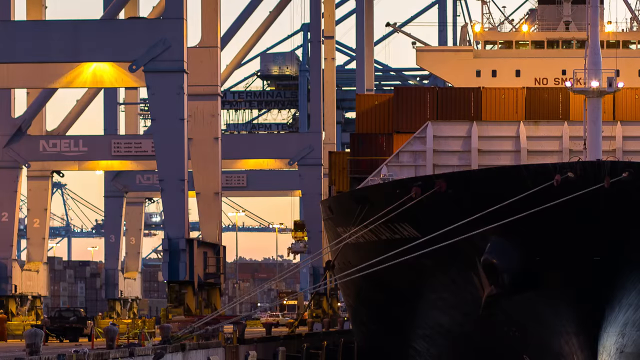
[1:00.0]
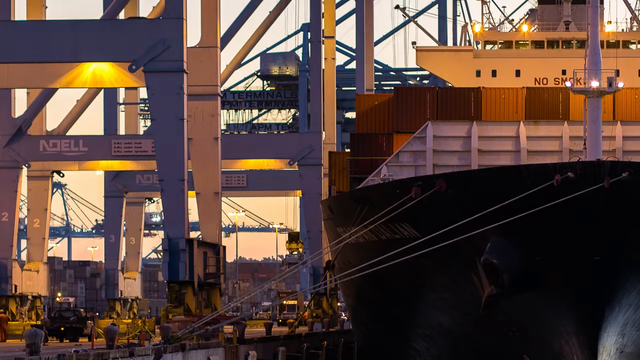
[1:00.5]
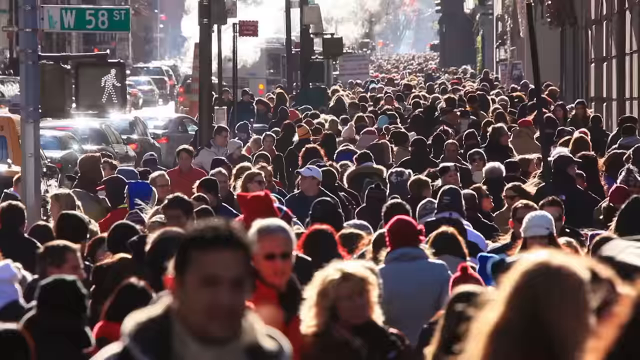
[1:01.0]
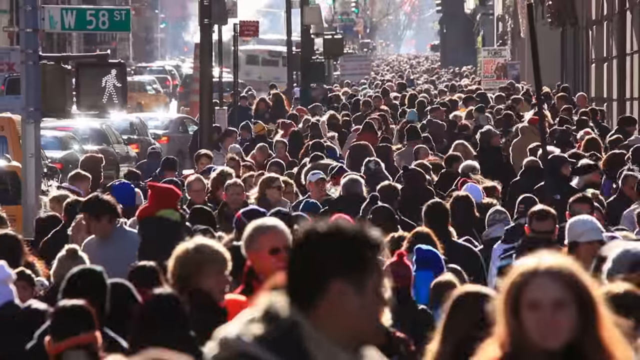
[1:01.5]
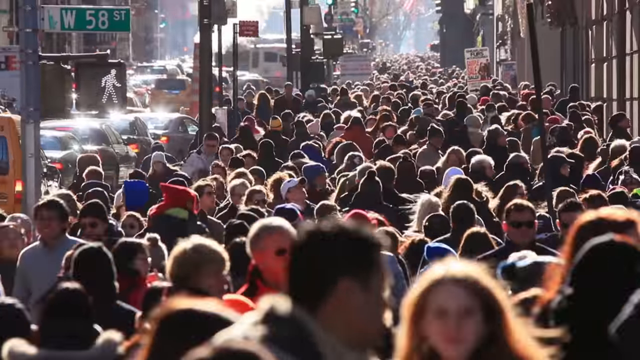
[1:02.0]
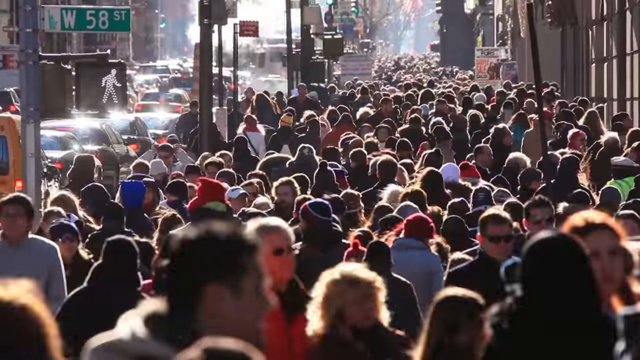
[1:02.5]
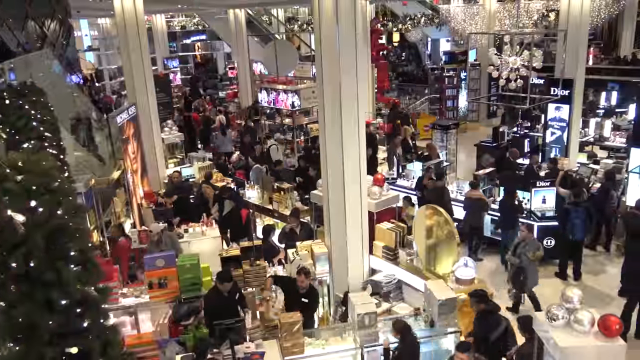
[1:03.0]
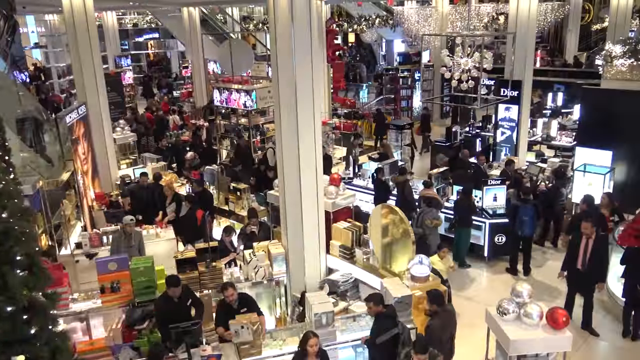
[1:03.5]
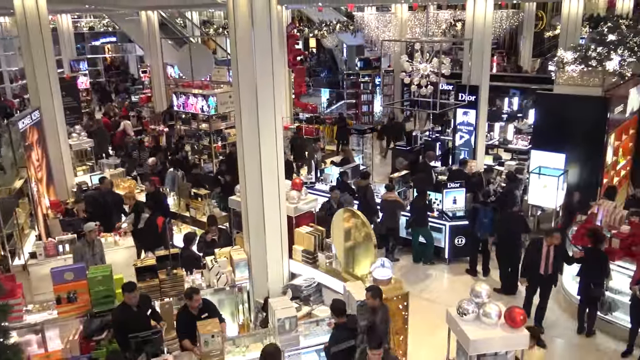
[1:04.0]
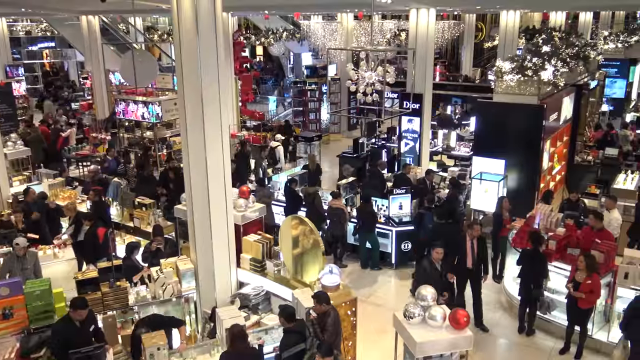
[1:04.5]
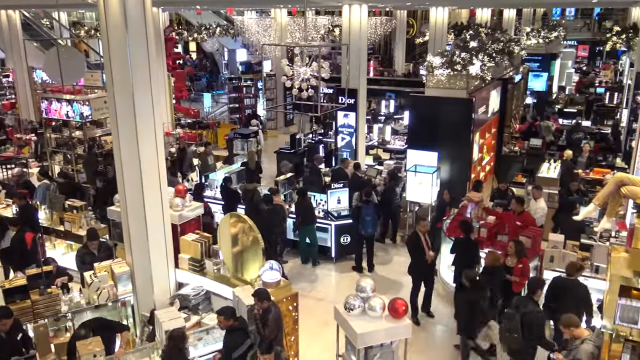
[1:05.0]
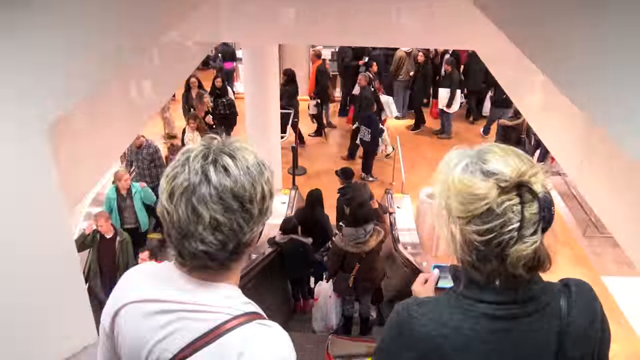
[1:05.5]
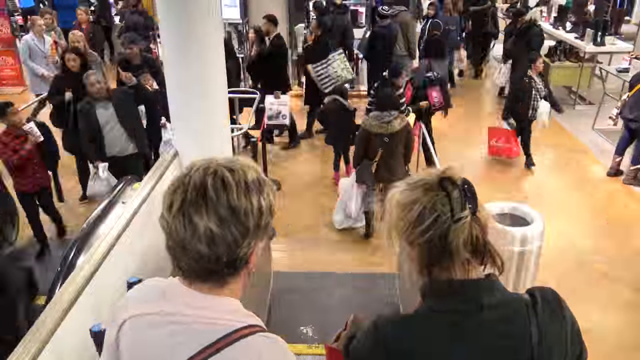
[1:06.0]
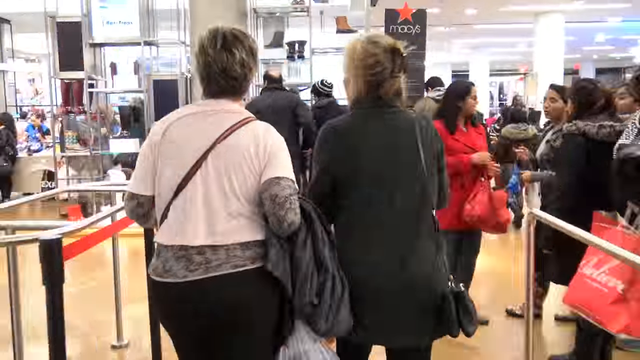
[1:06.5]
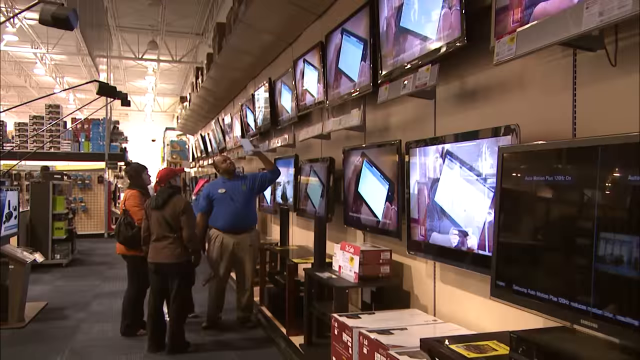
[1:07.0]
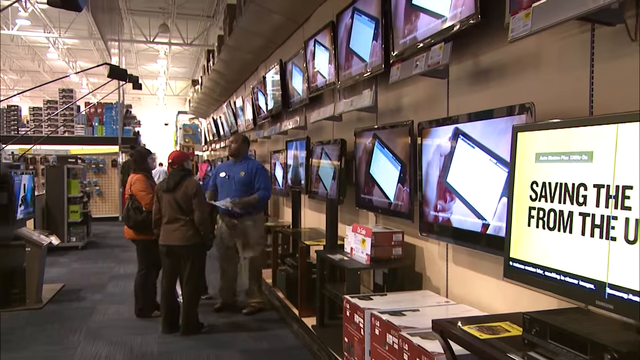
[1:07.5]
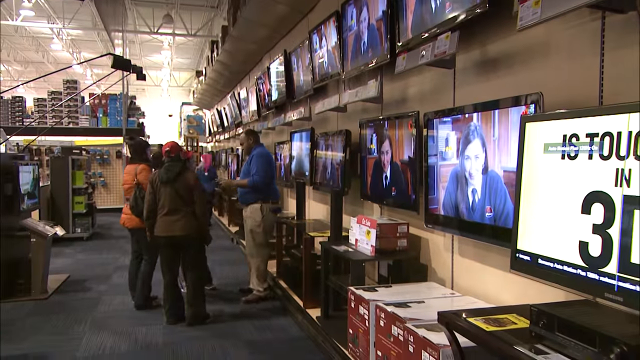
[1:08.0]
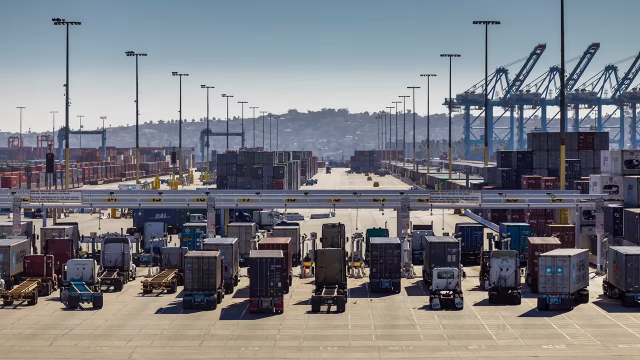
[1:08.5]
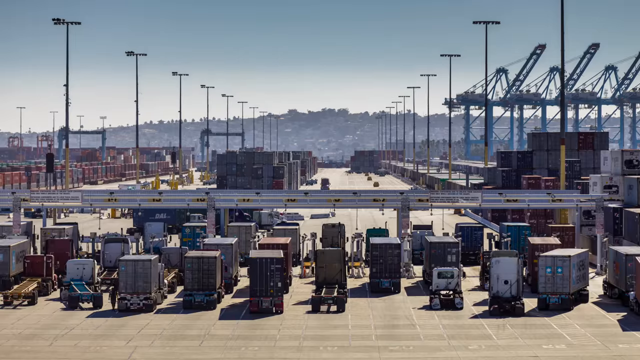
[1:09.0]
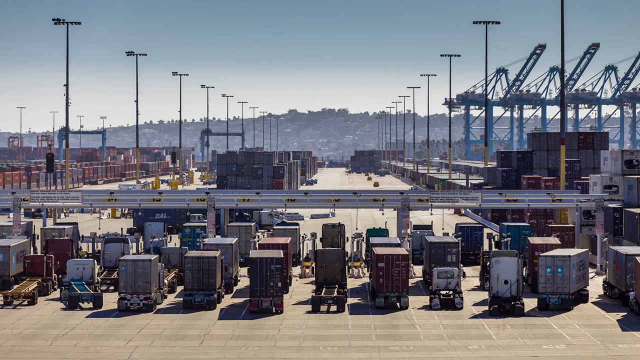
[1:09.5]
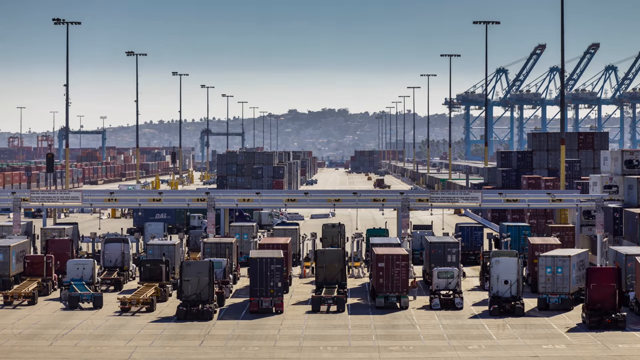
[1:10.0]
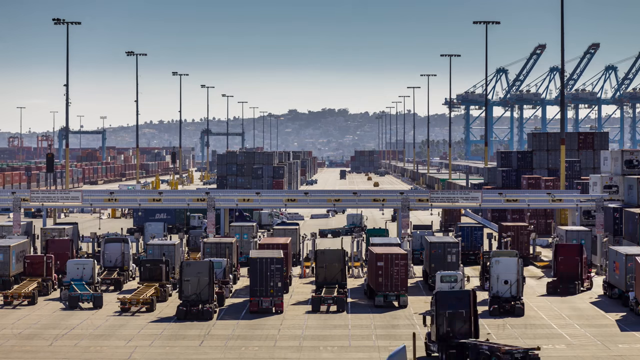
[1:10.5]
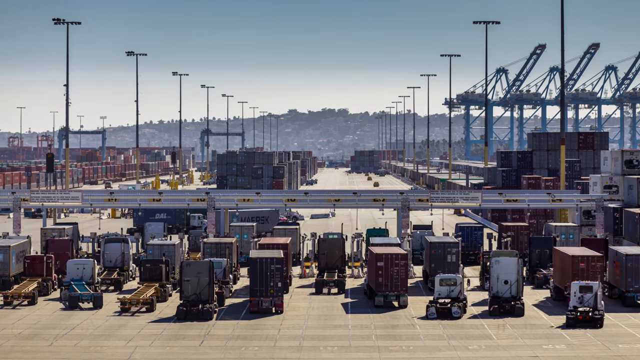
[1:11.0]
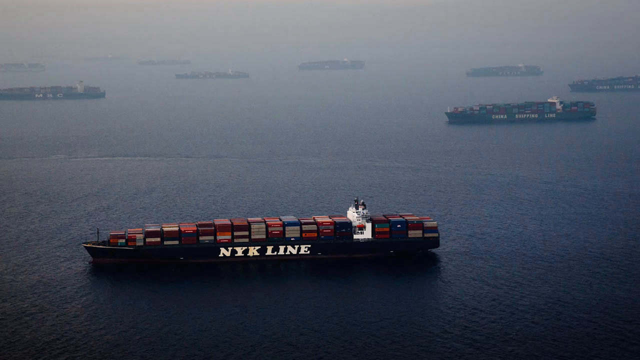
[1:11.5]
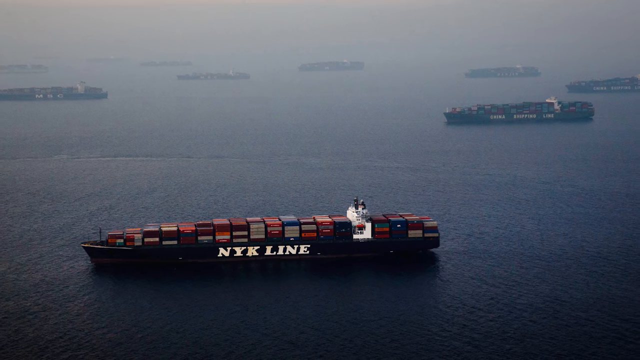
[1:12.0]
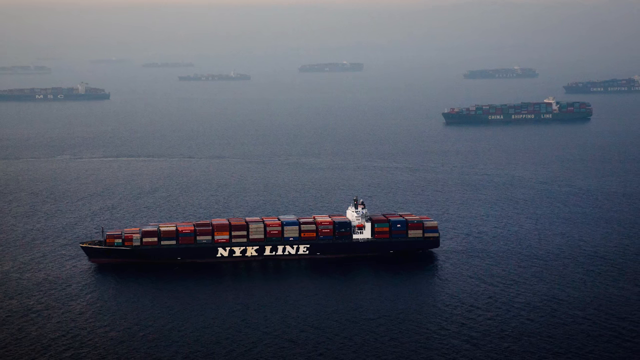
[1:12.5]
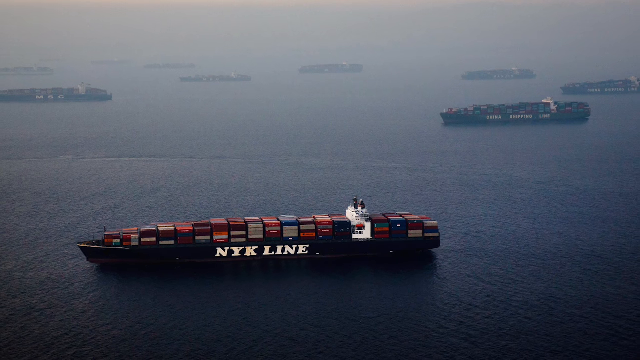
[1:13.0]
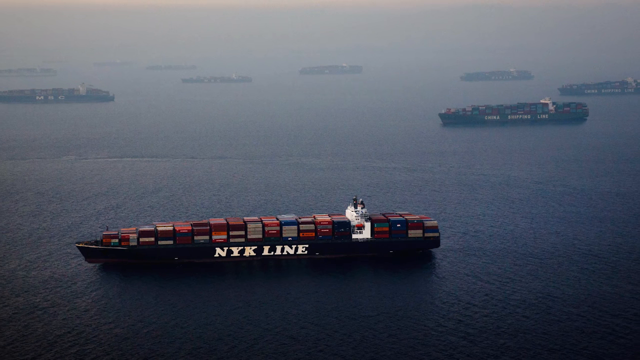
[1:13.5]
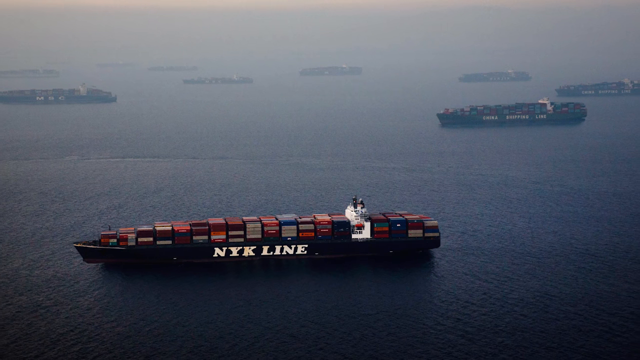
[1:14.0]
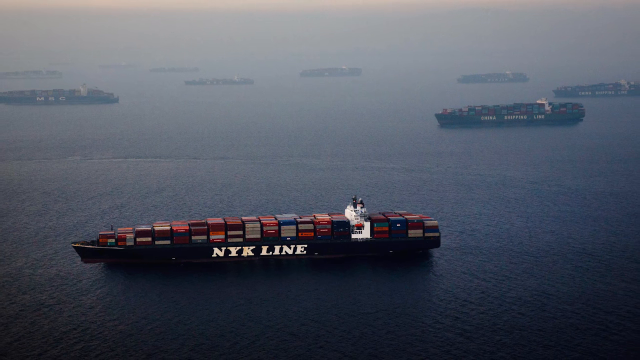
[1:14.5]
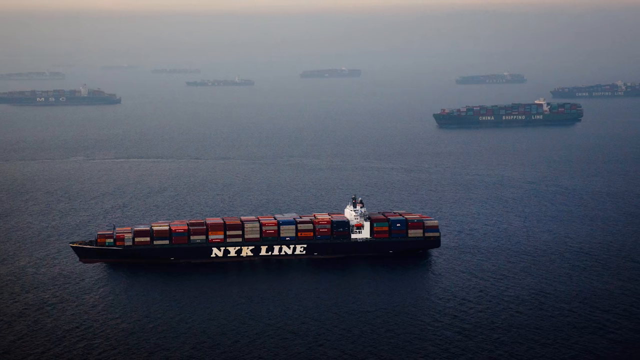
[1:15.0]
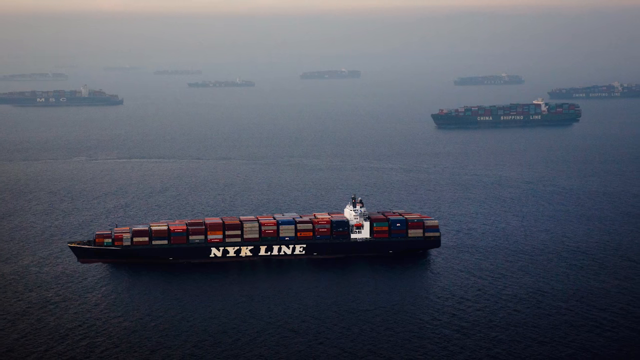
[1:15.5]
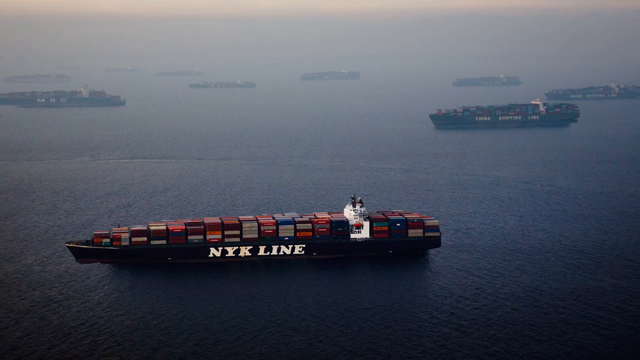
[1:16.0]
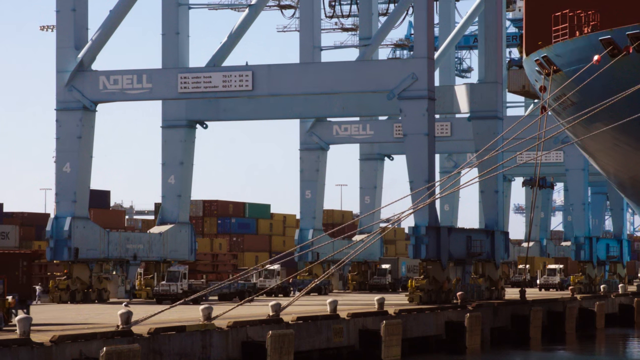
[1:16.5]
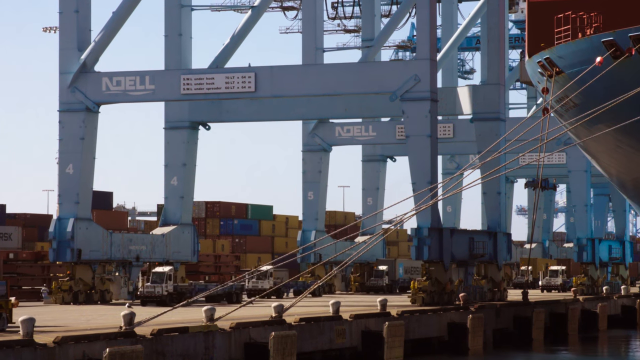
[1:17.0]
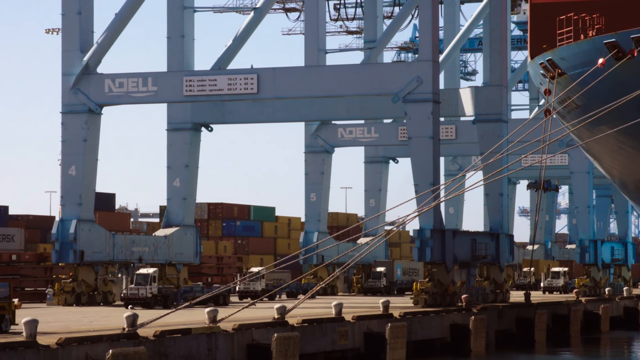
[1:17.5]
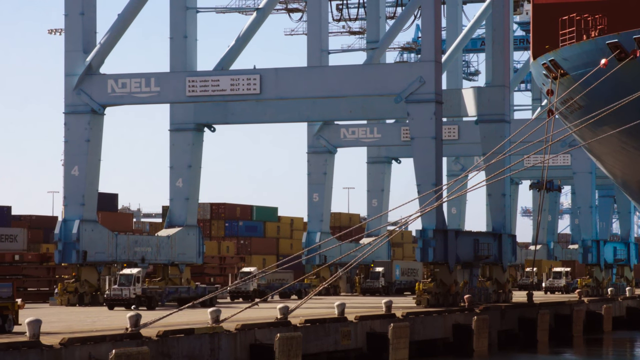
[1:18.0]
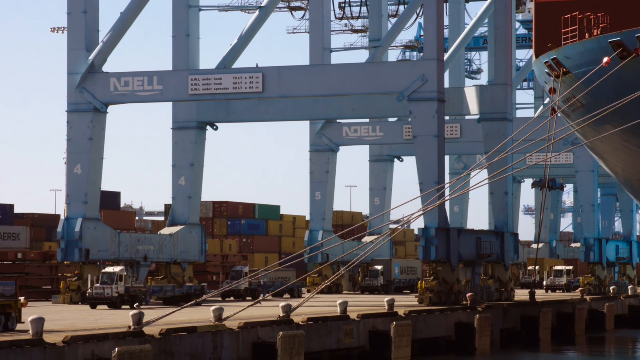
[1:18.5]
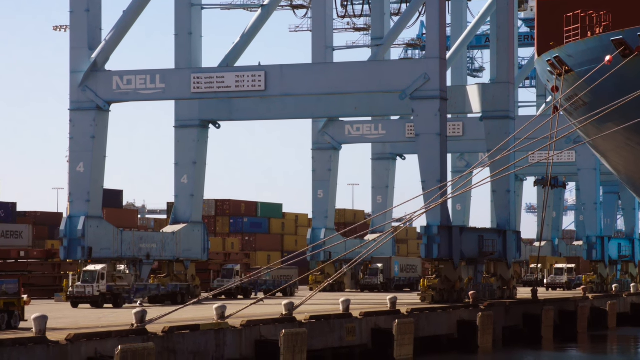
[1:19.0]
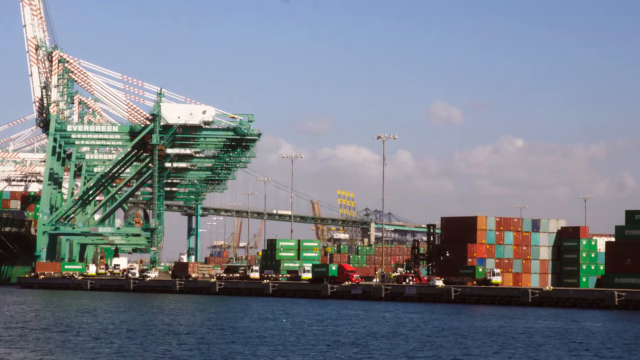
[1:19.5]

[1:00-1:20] The front of another container ship is shown. A crowd of people walks shoulder to shoulder on a very crowded sidewalk, and a street sign says "West 58th Street." Many people walk around inside a department store as the camera pans to the right. People go down an escalator and walk out onto the floor. A man shows several televisions to a couple who look at them. Back at the dock, a bunch of big rigs line up and appear to drive through some kind of gate to reach the area where the containers are, probably to have containers put onto their backs. A container ship is shown from high up in the air, the whole ship visible, with several other container ships in the background, all floating in the middle of the ocean. The one in the foreground is black with white letters on the side that say "NYK Line"; the other boats are a little faded from the haze in the air. Different shots follow of the cranes that unload the containers off the boat.